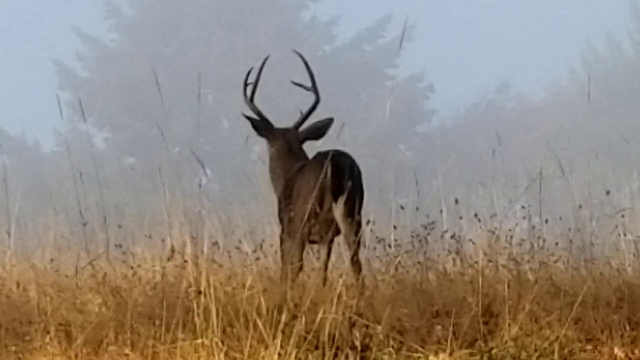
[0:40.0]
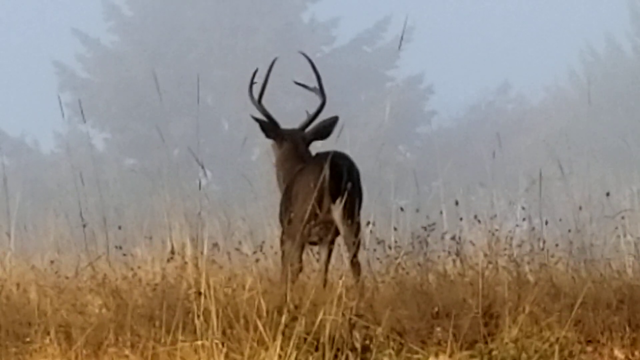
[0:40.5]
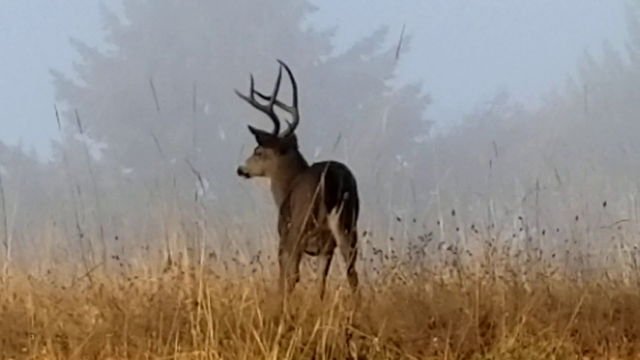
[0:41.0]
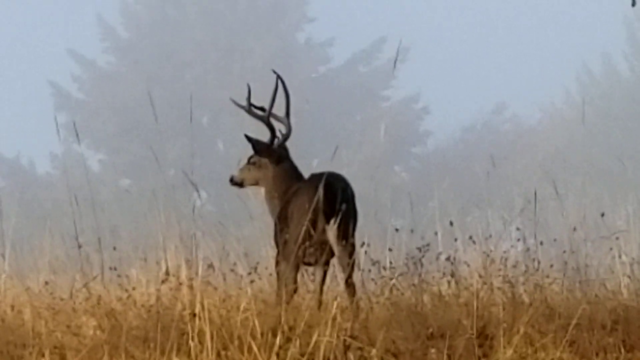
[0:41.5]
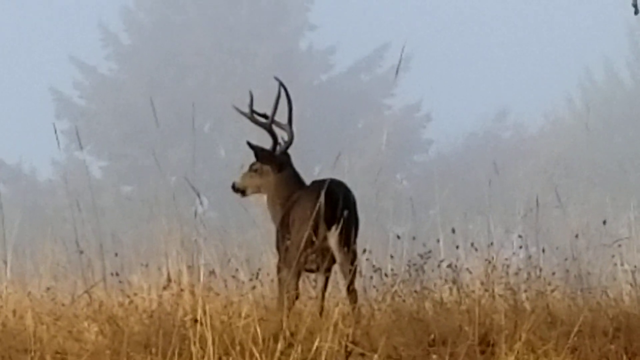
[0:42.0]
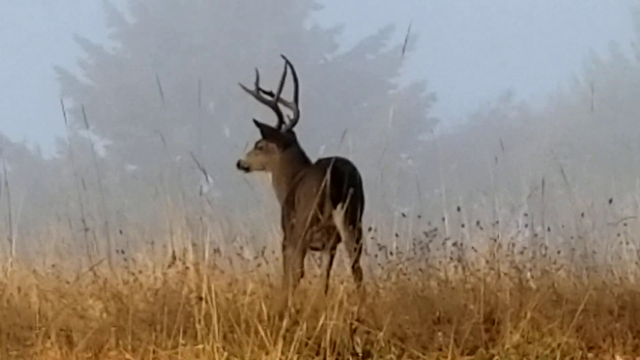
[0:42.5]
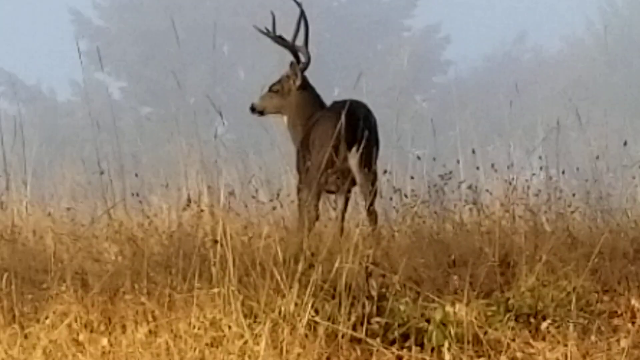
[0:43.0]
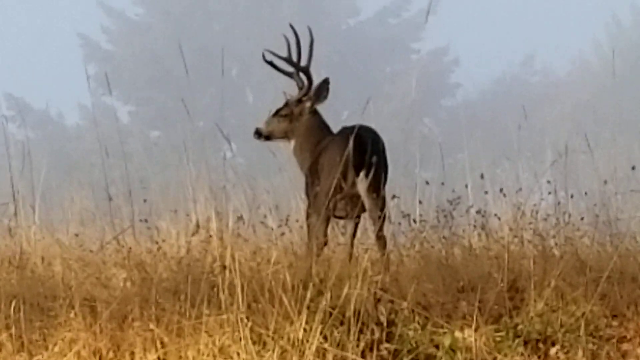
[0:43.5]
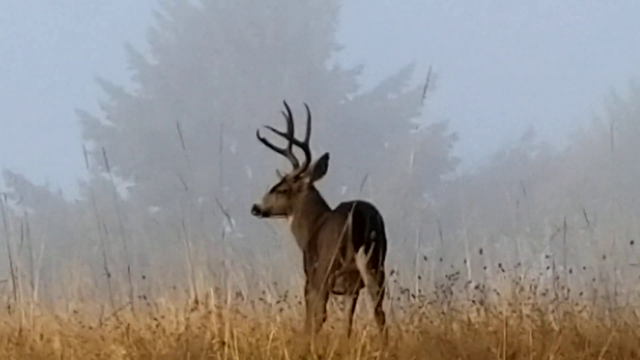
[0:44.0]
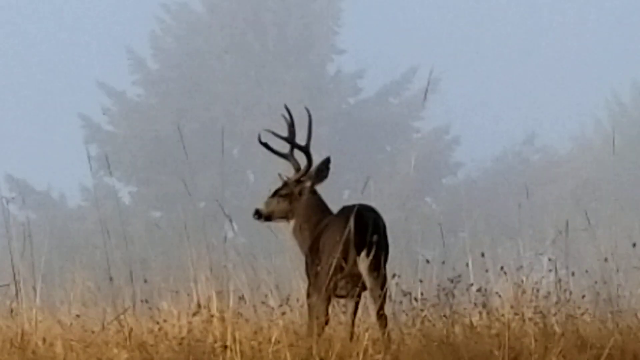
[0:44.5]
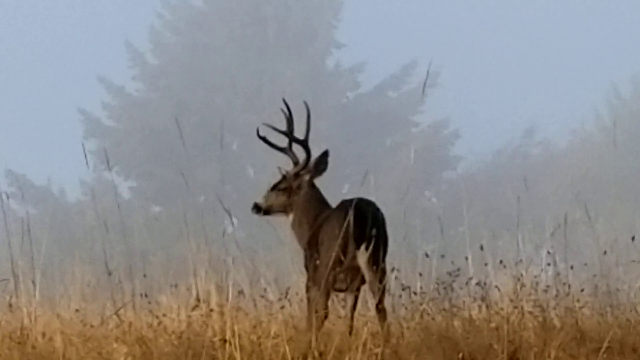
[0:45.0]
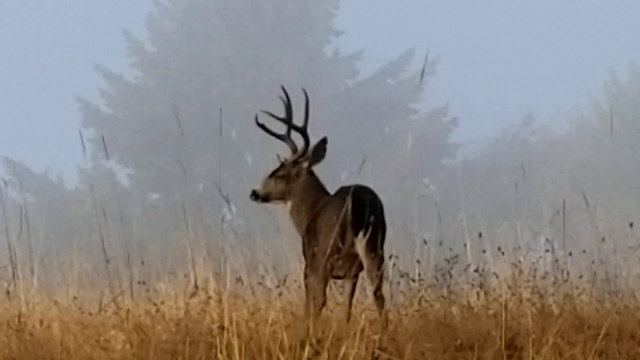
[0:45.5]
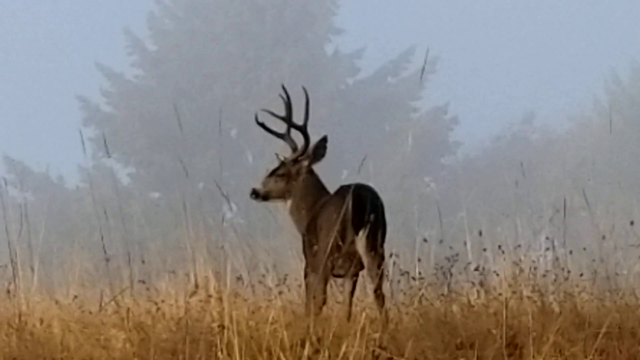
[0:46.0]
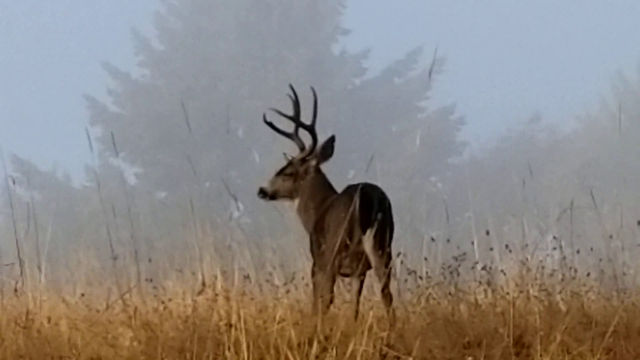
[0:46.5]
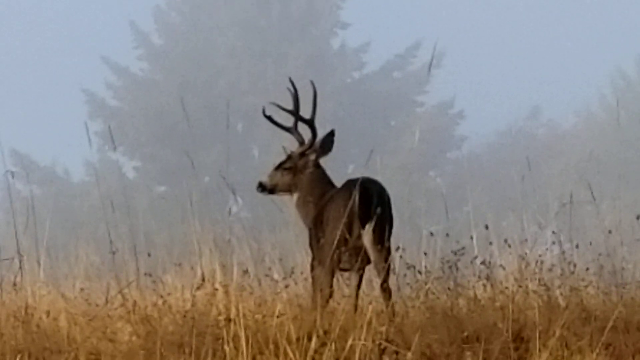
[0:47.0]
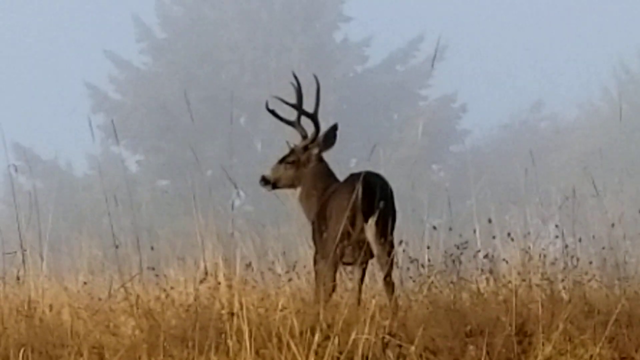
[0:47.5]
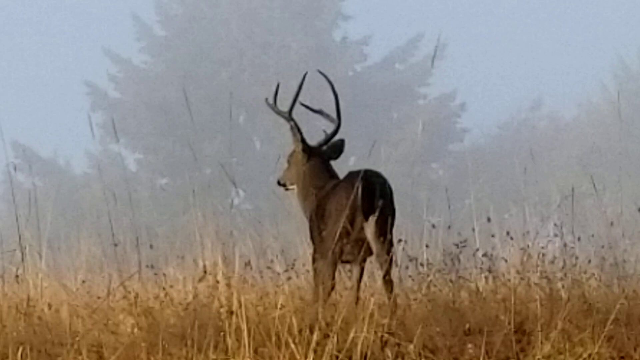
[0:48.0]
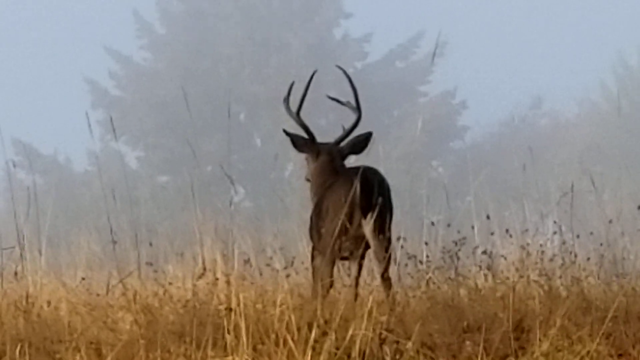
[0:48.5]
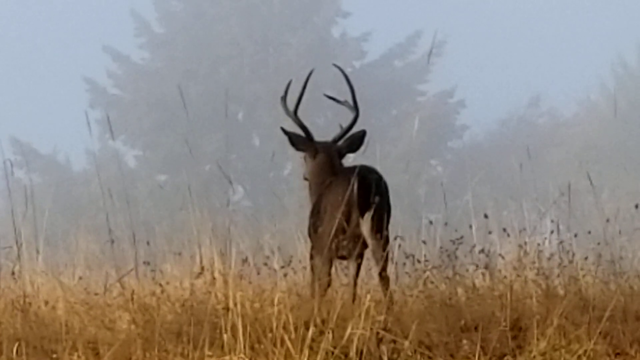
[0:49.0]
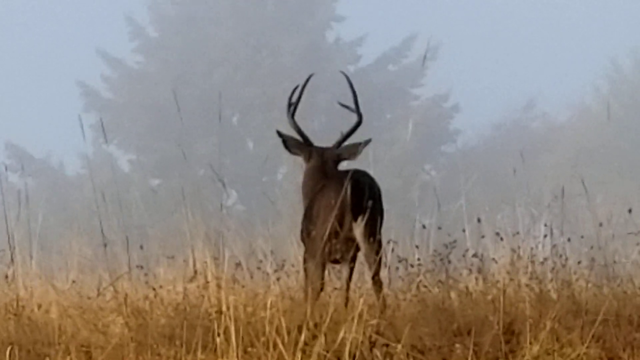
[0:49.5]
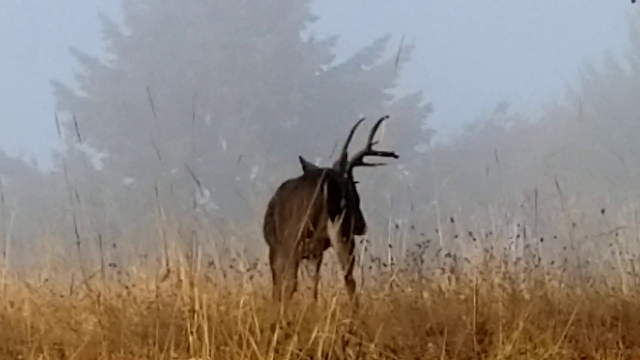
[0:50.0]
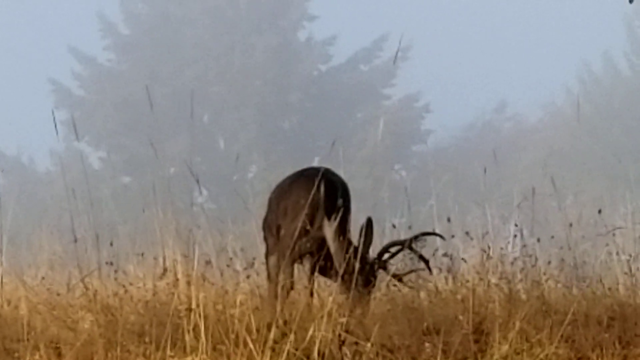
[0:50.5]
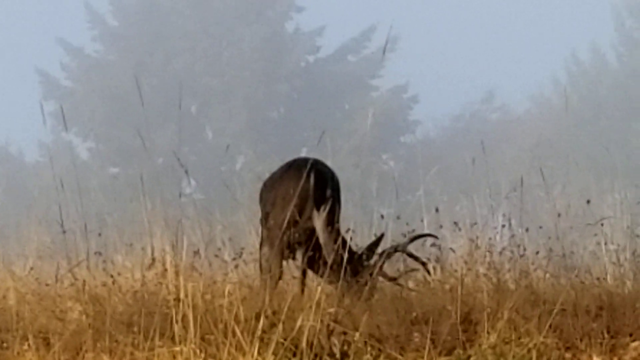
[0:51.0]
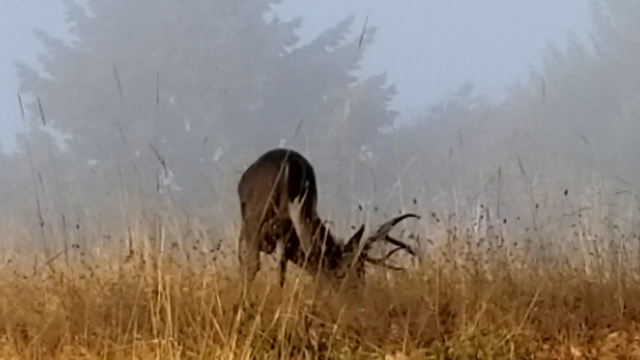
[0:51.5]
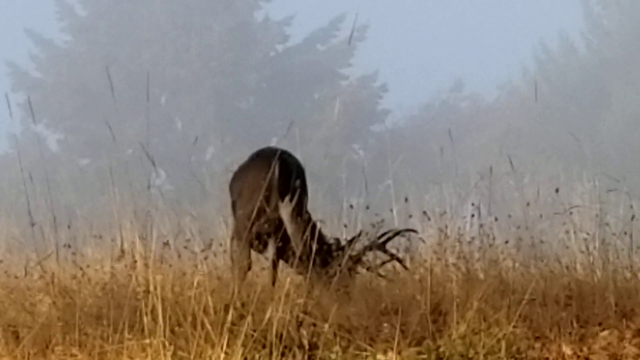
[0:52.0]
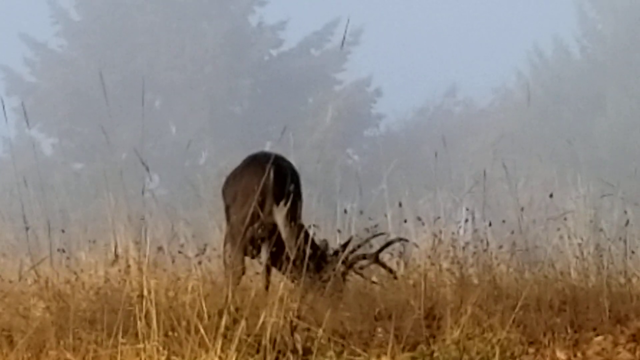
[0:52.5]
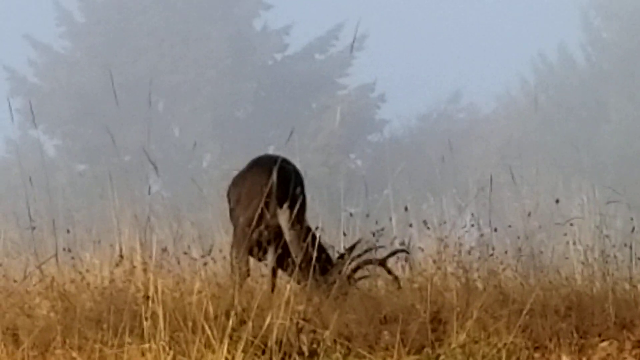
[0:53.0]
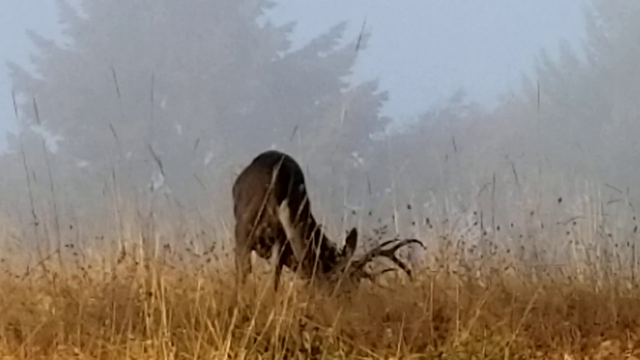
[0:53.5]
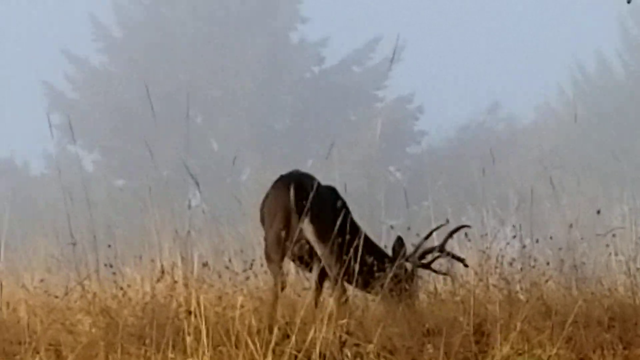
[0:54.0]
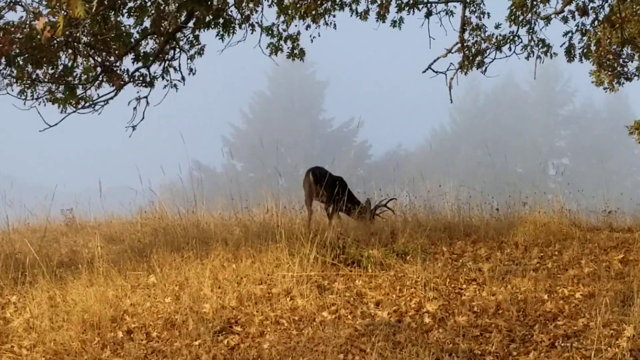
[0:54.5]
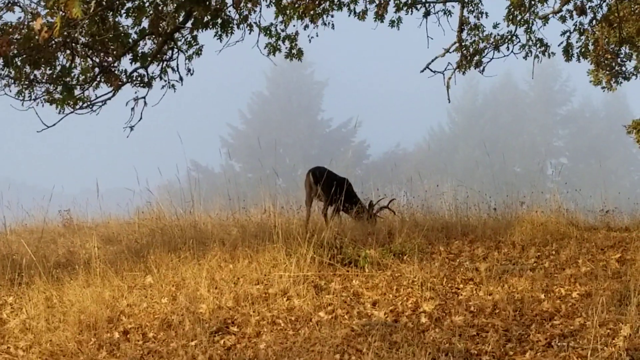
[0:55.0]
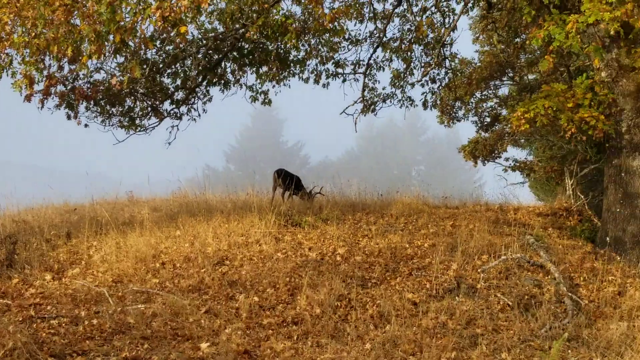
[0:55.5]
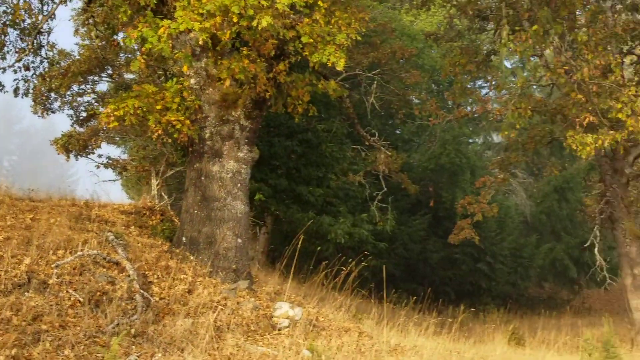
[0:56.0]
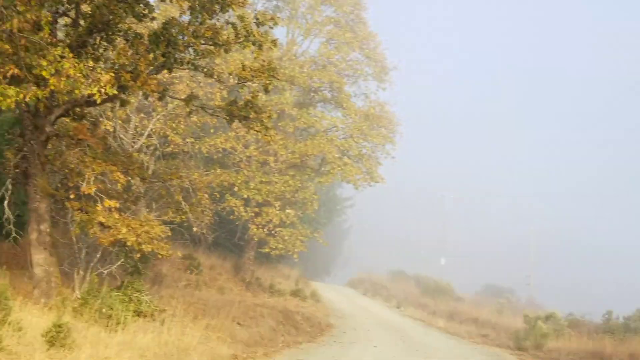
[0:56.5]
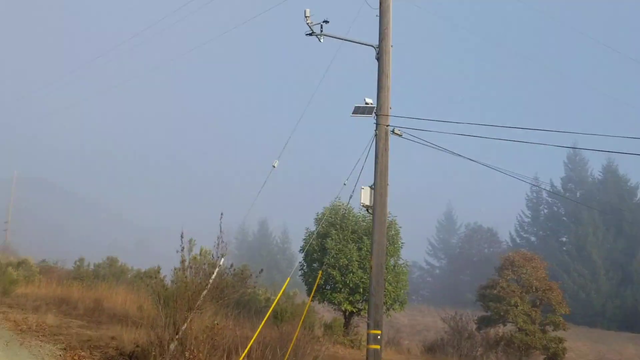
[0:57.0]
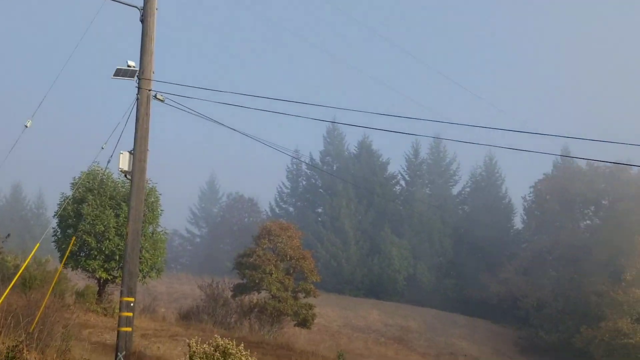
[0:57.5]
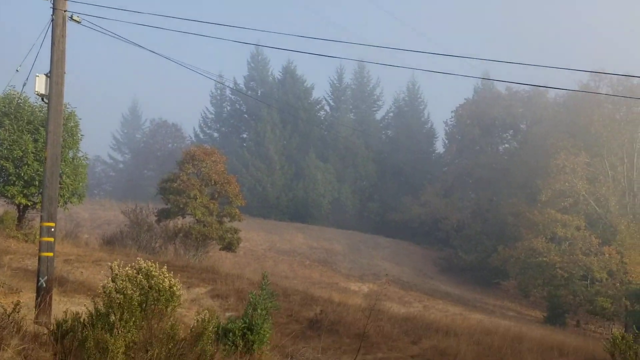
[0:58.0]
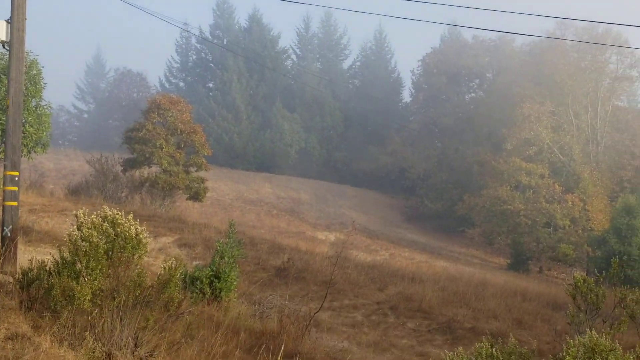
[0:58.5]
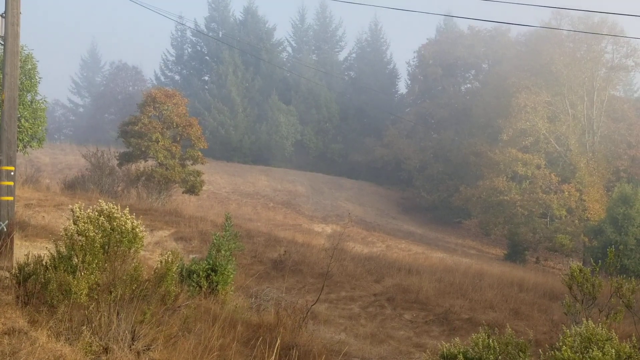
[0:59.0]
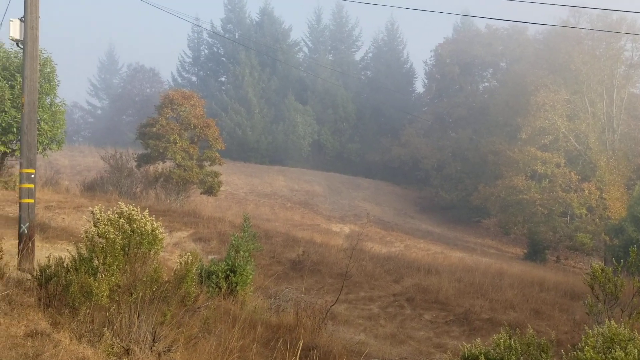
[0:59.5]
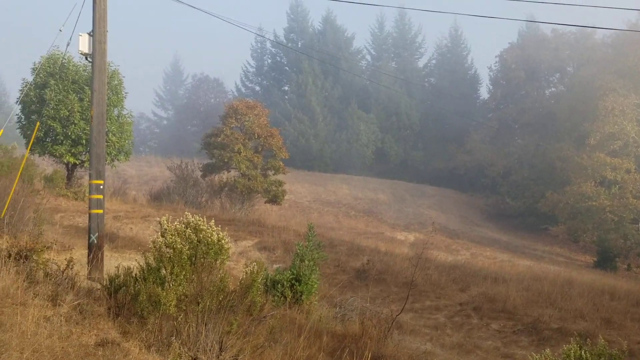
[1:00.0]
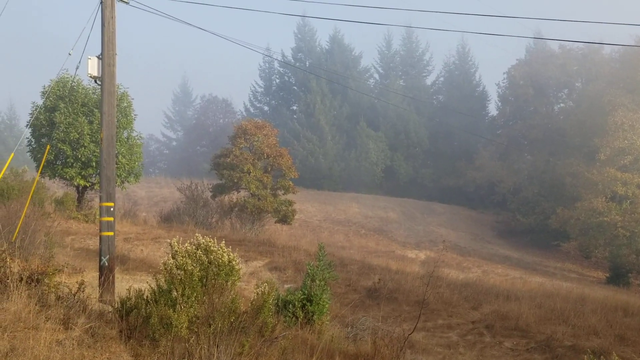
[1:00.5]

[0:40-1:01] The deer stands in the field, looking the exact opposite way from the person holding the camera. The camera has zoomed in quite a bit, making the deer feel almost right beside the filmer when it is not. The deer again looks to the left-hand side, this time turning its head significantly more to the left. Its left ear perks up and stands tall. After a moment, the deer turns to face the center, in the opposite direction from the person filming, and eventually settles in and begins to eat again. The camera then turns away from the deer to show some land behind the filmer, where visible power lines and some very tall pine trees can be seen.